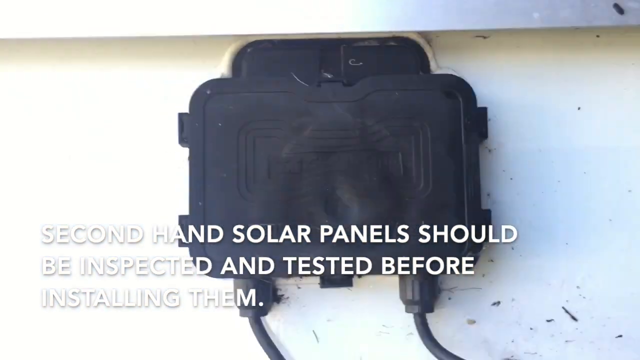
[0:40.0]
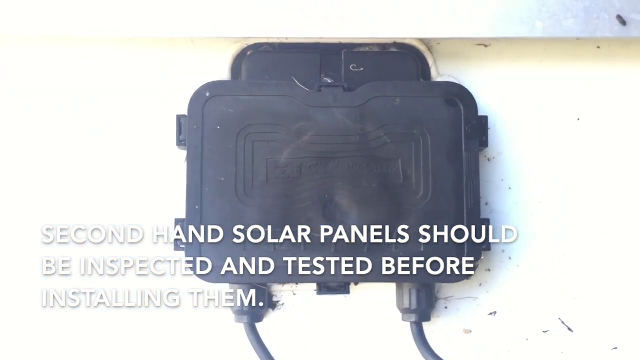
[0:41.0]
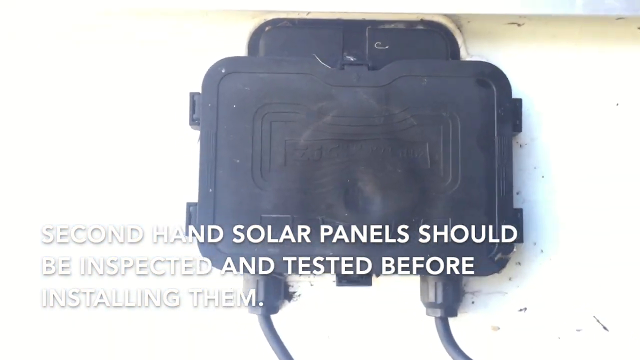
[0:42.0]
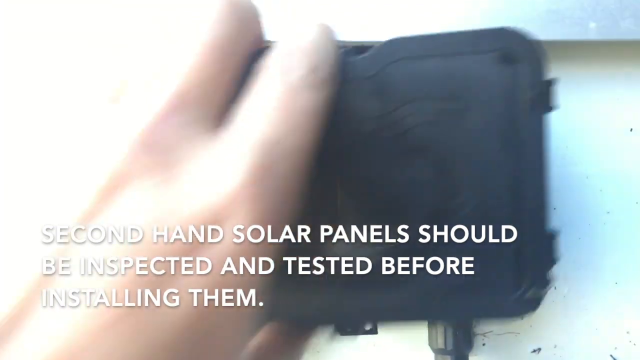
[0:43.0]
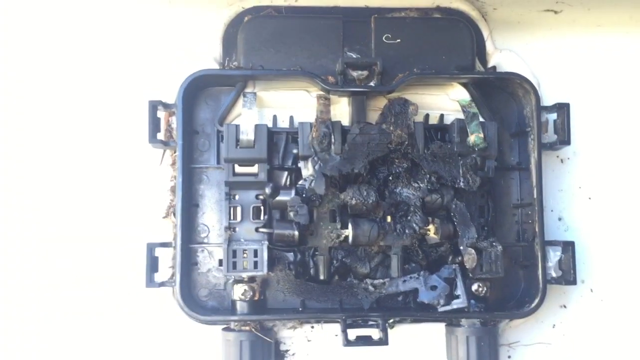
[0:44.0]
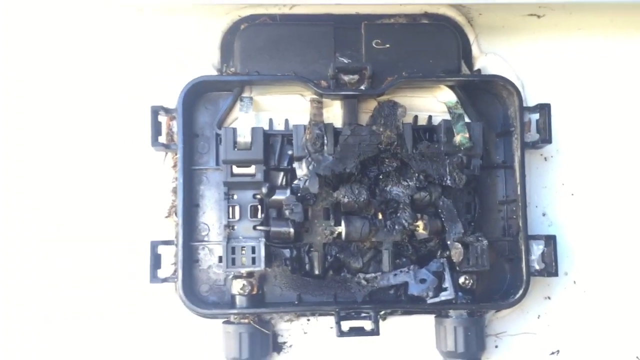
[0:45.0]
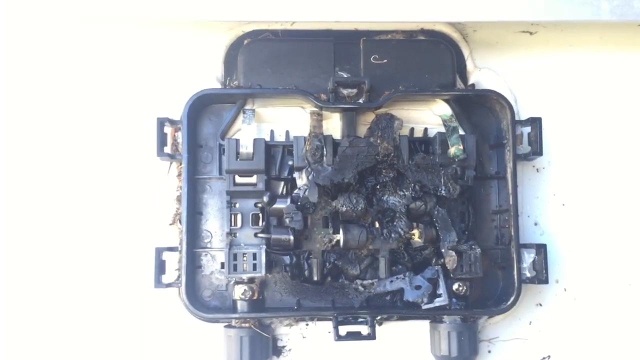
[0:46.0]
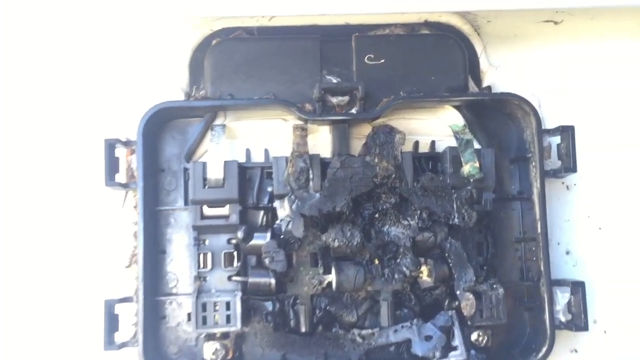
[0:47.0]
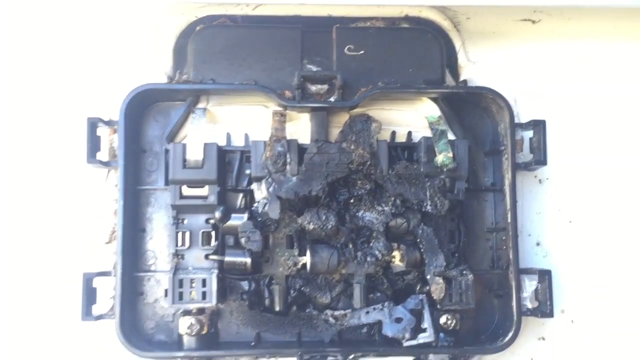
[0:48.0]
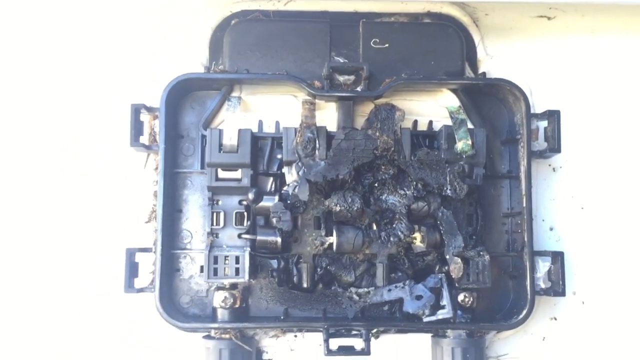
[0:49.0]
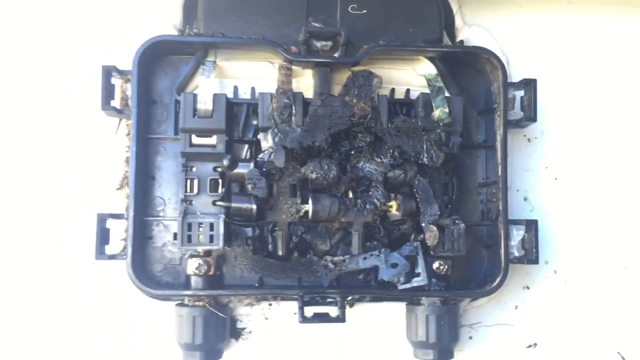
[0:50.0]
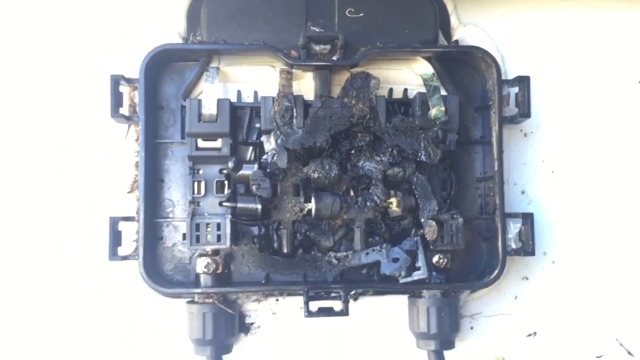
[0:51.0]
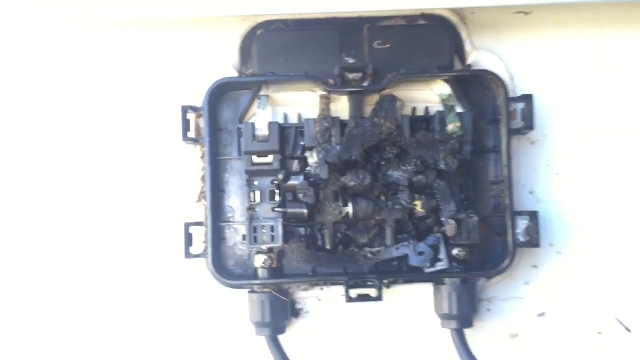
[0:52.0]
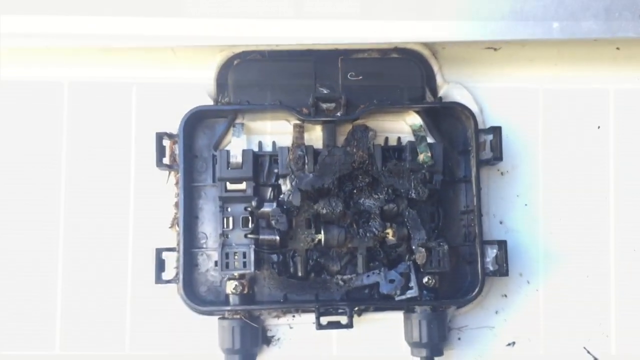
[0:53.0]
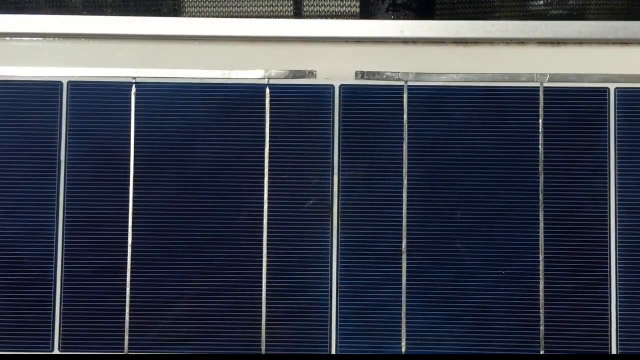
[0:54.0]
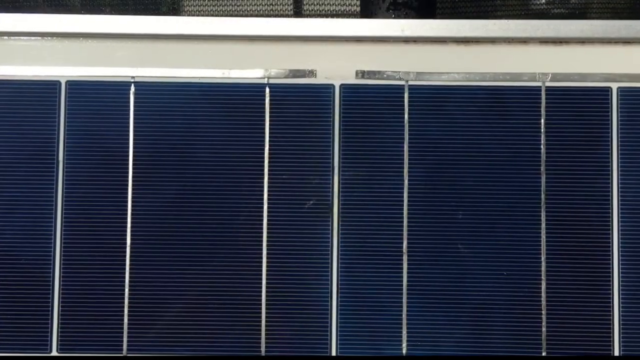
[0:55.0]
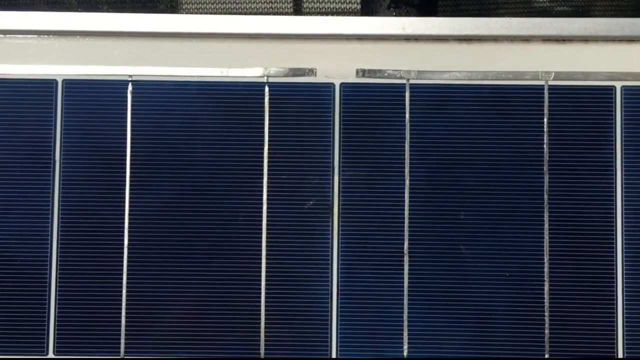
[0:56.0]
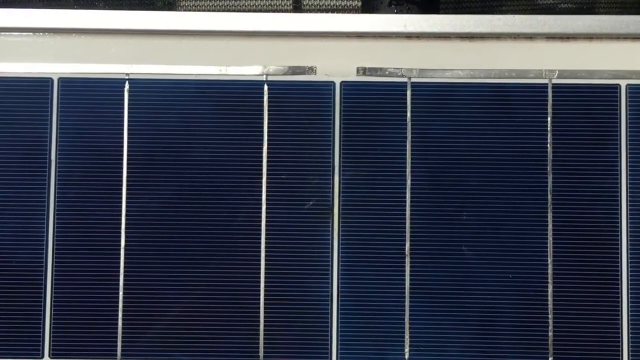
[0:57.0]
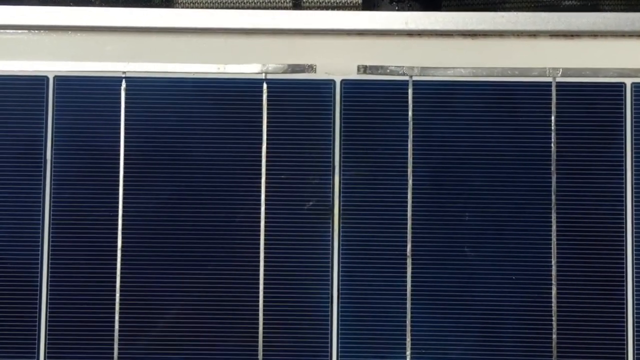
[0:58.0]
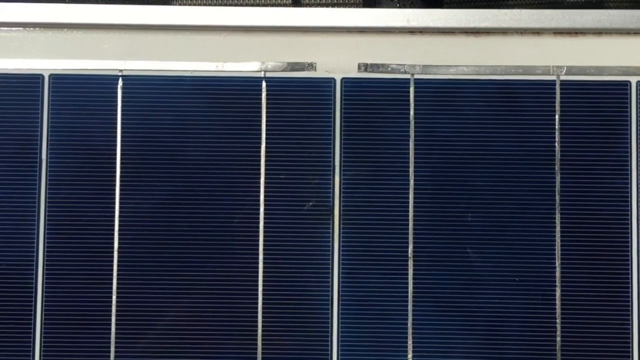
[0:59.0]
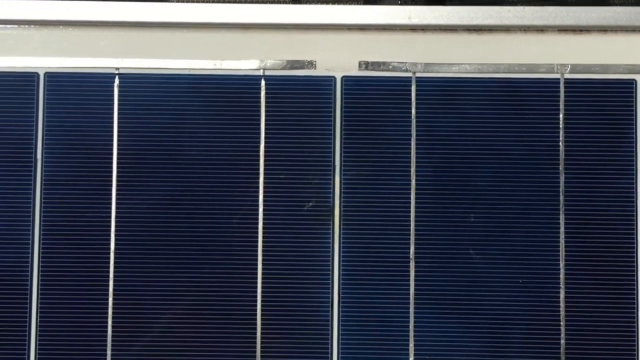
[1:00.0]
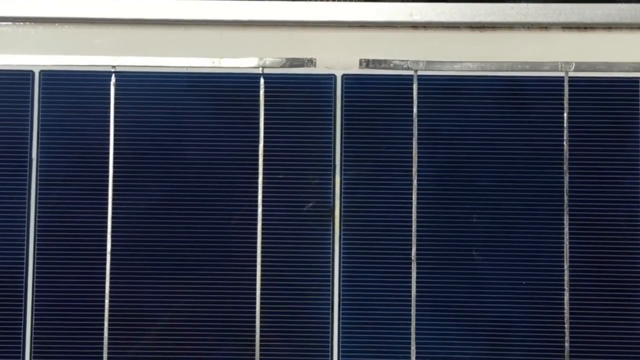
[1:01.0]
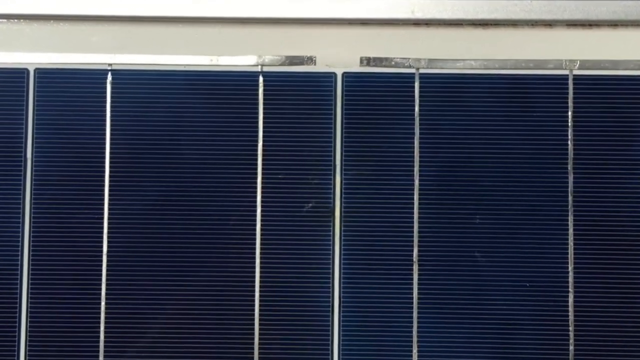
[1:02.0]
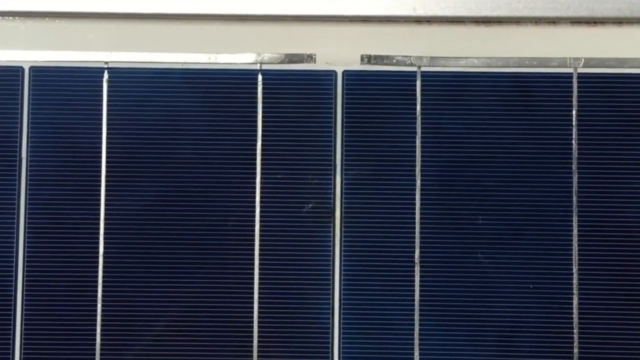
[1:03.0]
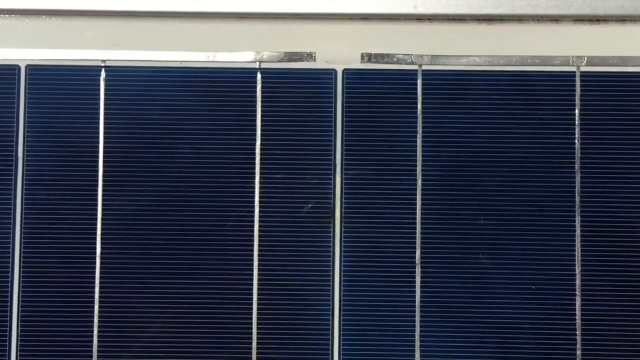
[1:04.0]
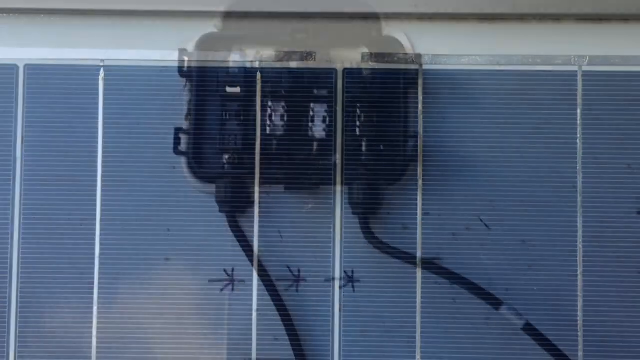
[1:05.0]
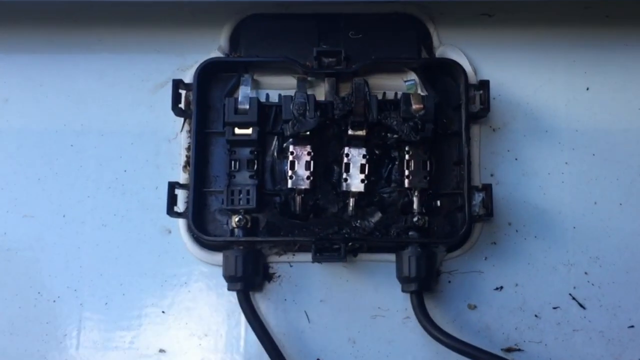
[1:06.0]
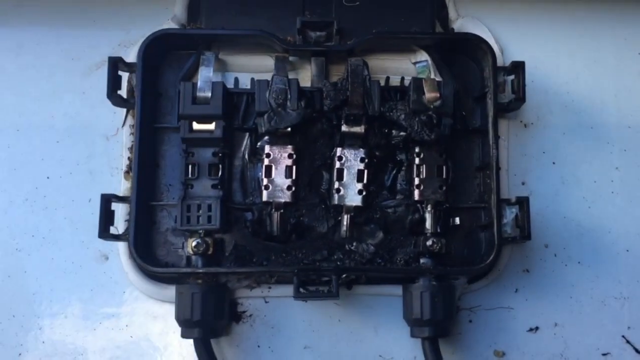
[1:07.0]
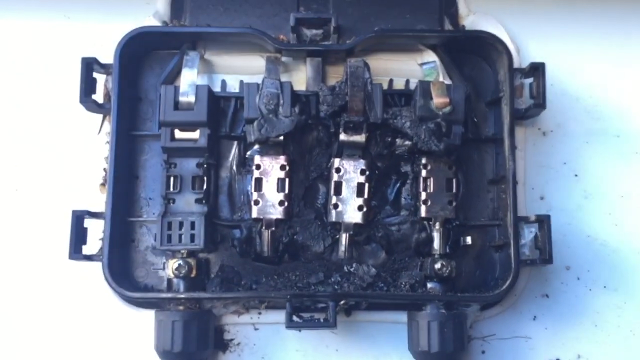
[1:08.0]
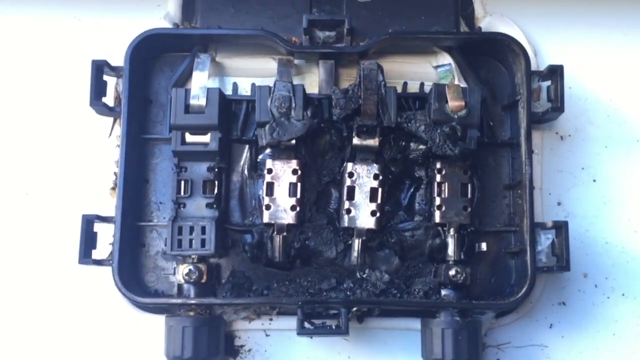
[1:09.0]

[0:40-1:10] The scene shows what looks like a white concrete wall and a black module of some sort, with white text on the lower third of the screen reading "Second-hand solar panels should be inspected and tested before installing them." A hand suddenly reaches in from the lower left corner and grabs the top of the unit, exposing an interior filled with what looks like small electric circuits. The unit is rectangular and about the size of the man's hand that pulled the top off. Two brackets on the right and left may be helping attach it to the wall. The camera zooms in closer, a little unsteadily, and then pulls back, showing the many pieces inside. The inside looks perhaps a bit melted, or as though there was perhaps a fire; it does not look like it is in its original state, and it is very black and irregular on the right side of the circuit area. The view then changes to what might be black solar panels spanning from left to right in a vertical direction, with thin white lines between each black panel, as the camera slowly pans in closer. Next, the wall bracket is shown again, with what might be the circuit area for the solar panels.